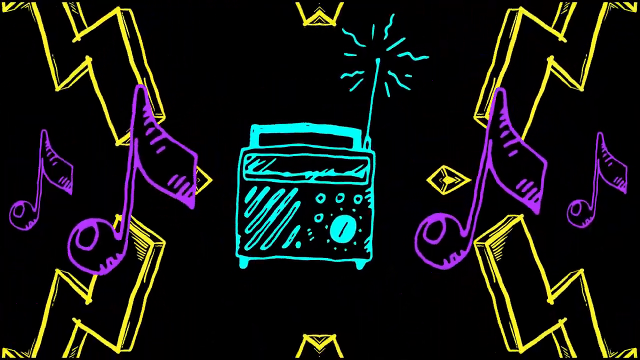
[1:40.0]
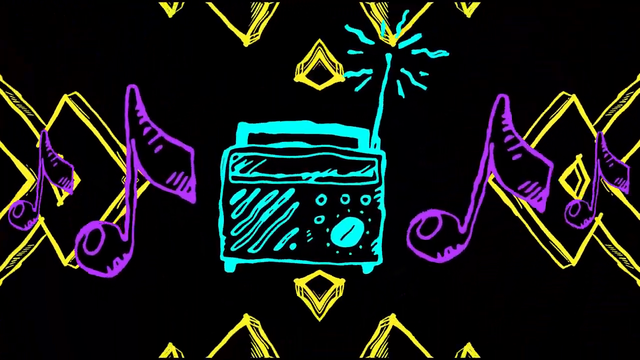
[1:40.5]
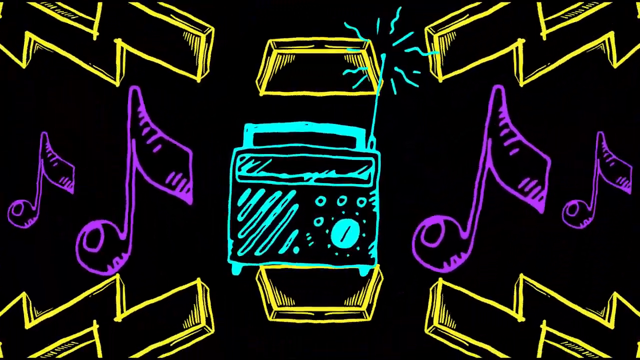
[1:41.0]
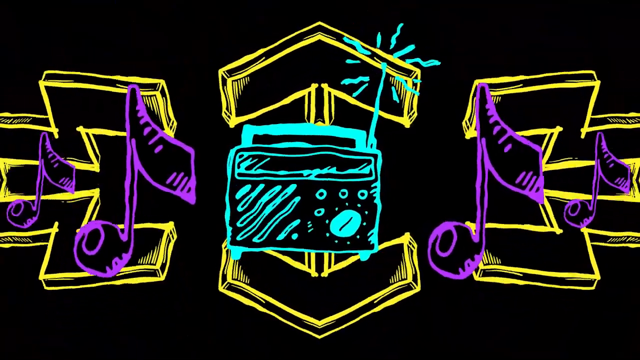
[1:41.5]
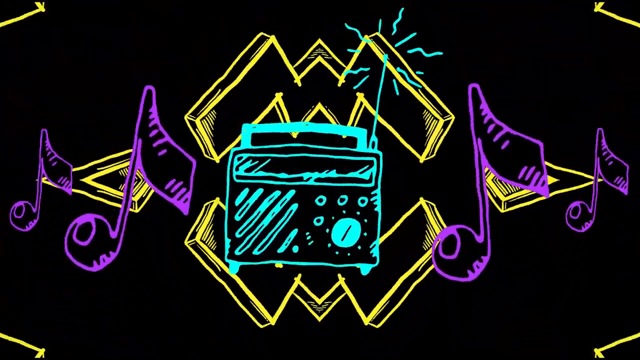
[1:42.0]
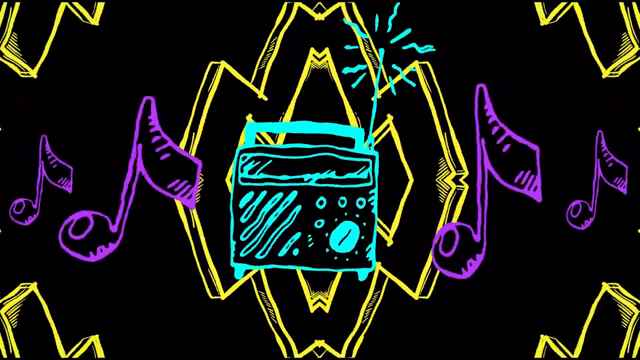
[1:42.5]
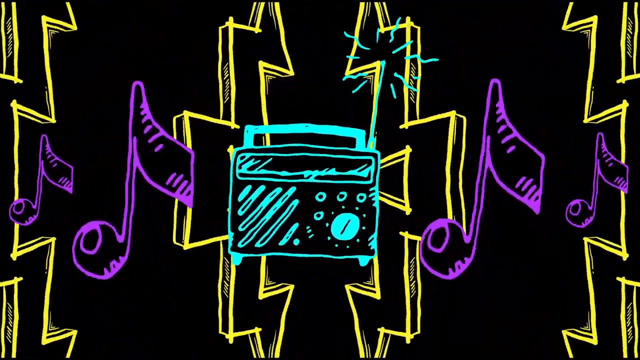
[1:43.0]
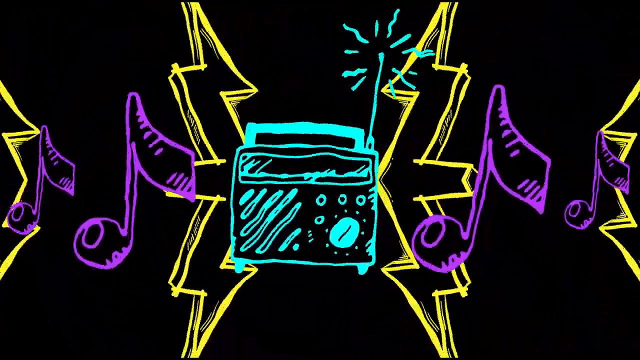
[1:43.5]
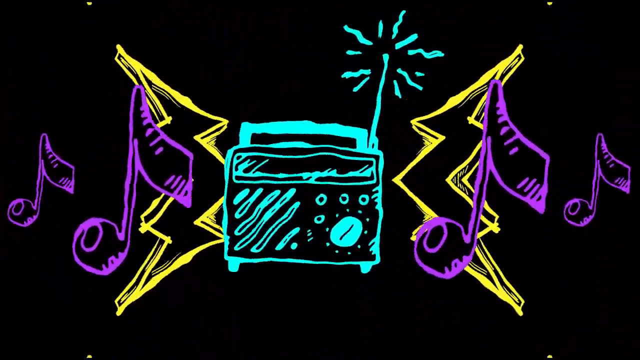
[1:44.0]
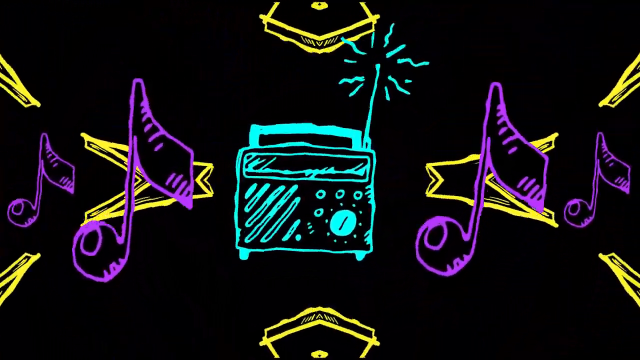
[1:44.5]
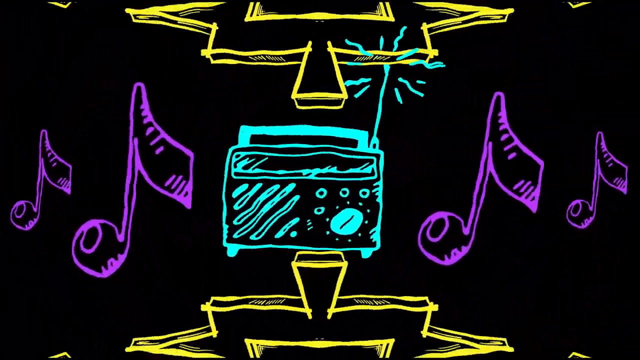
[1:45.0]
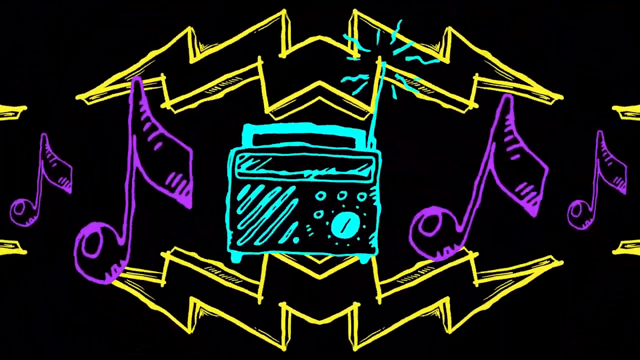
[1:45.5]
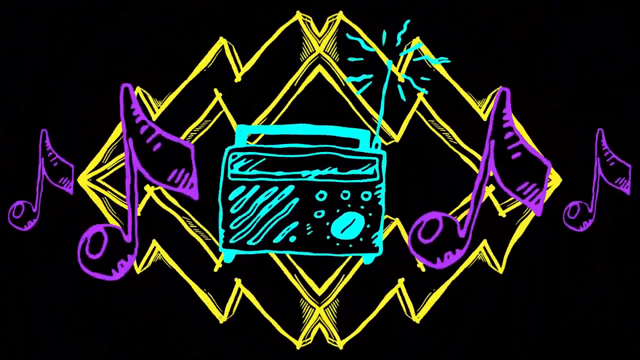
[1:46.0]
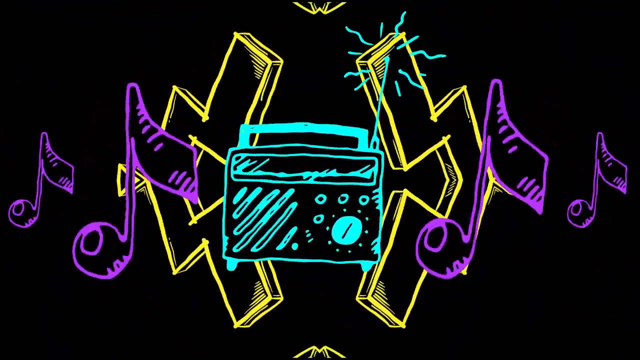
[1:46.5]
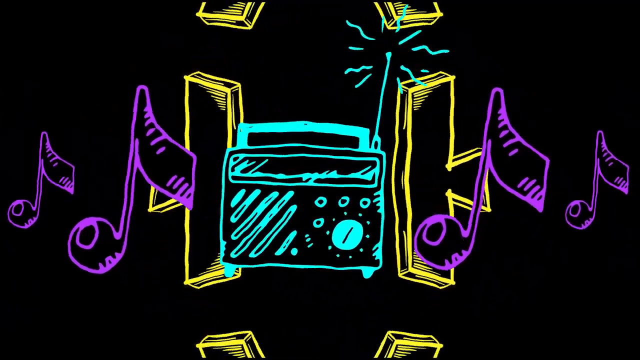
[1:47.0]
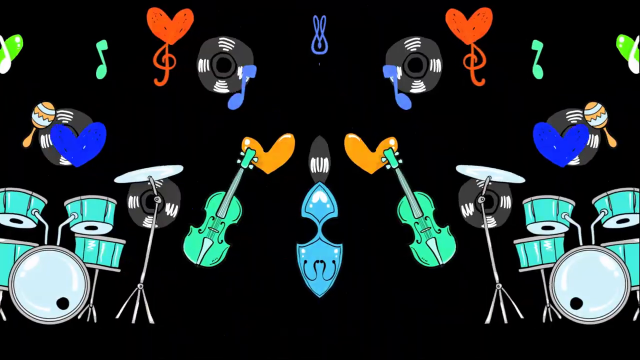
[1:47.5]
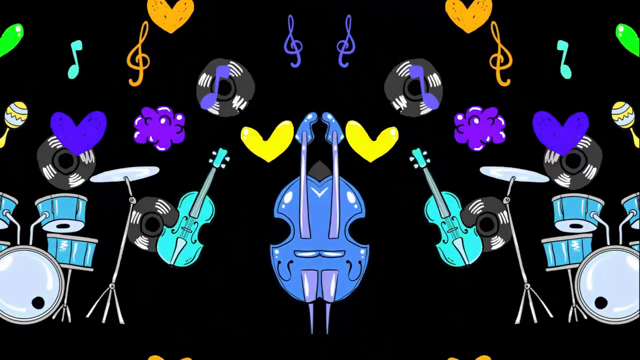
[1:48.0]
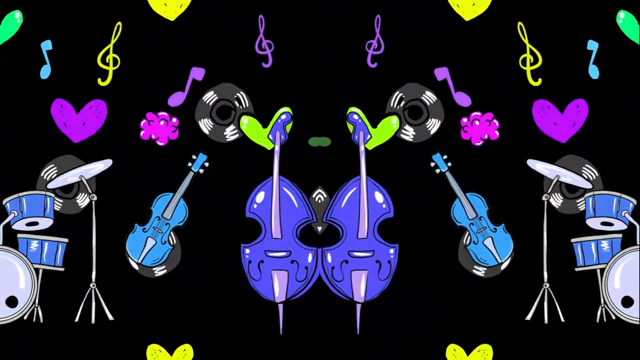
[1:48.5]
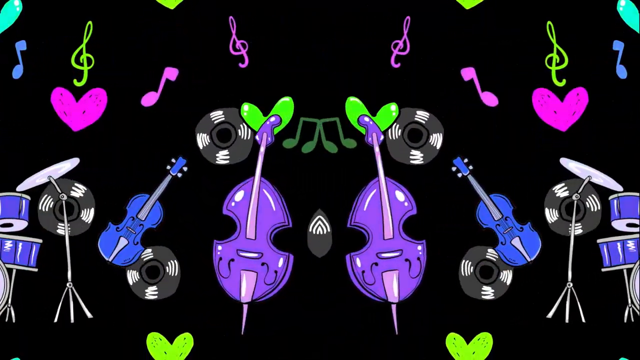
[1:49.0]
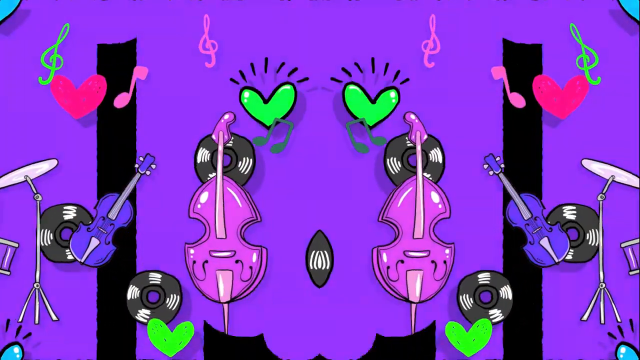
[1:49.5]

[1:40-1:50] The radio appears with music notes on each side of it and something that looks like a thunderbolt at the top and bottom of the background, and those sort of move around. It then transitions to the musical instruments, this time starting from the center of the screen and going out: two drum sets, then two violins and two cellos, originating from the center and moving out to the sides. The video then flashes to an image of other musical instruments on a green background, including a saxophone and a cello, and cuts off a little abruptly.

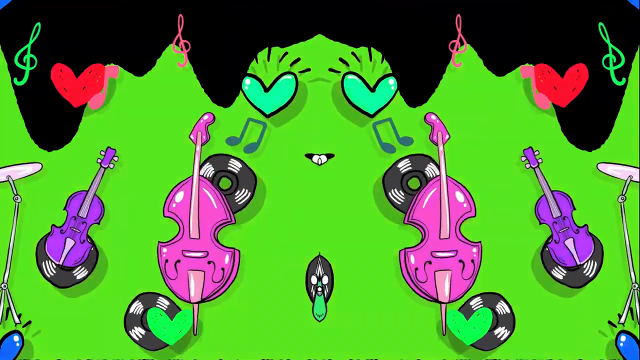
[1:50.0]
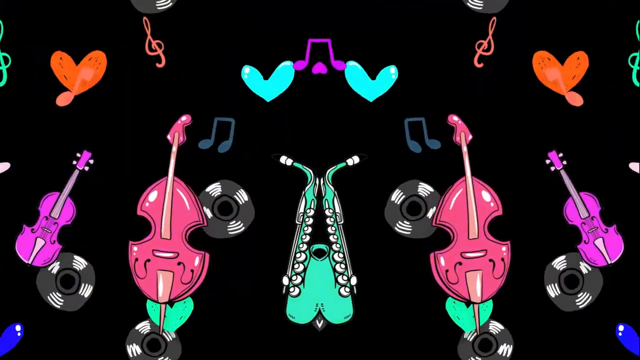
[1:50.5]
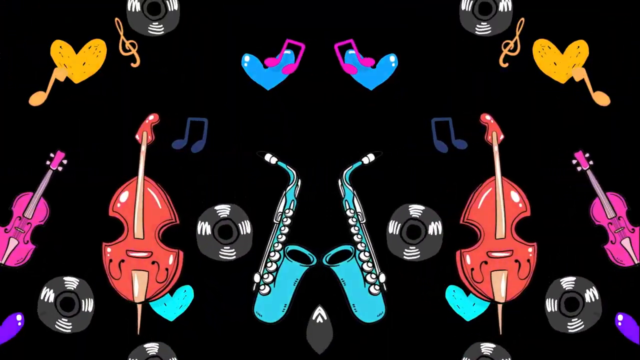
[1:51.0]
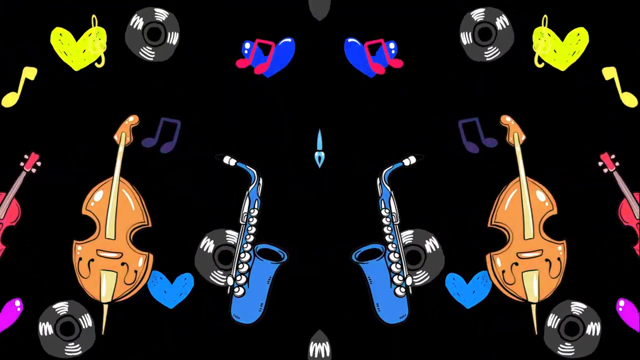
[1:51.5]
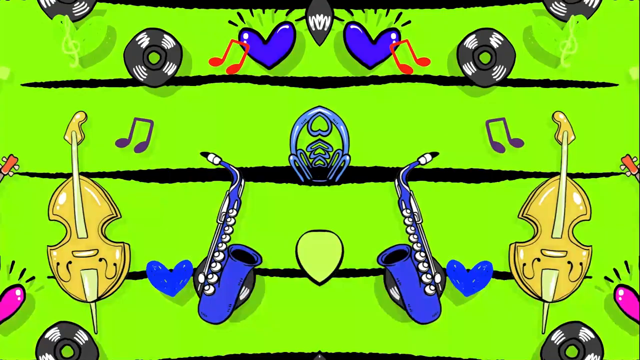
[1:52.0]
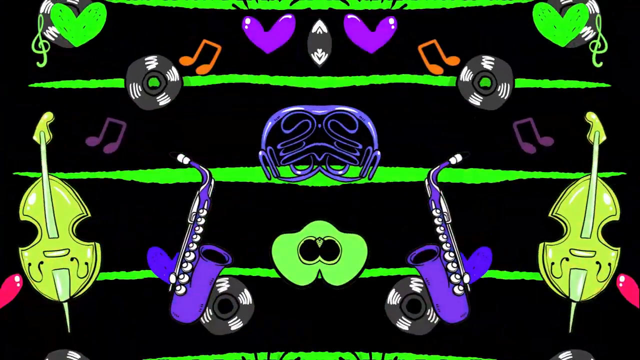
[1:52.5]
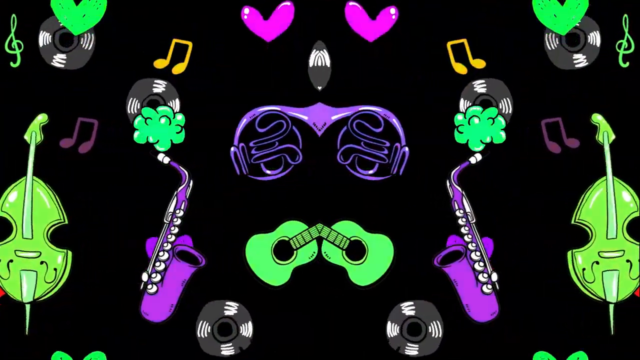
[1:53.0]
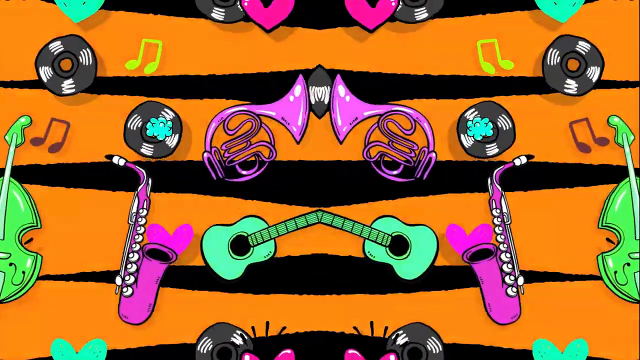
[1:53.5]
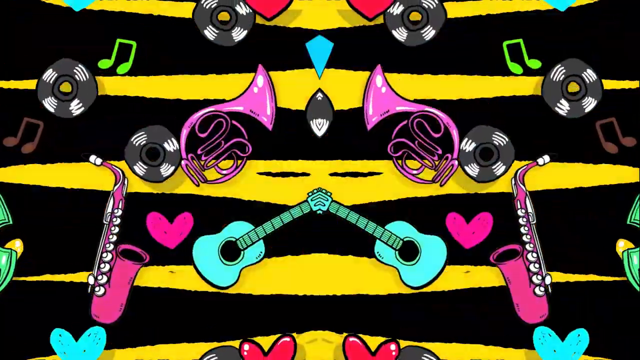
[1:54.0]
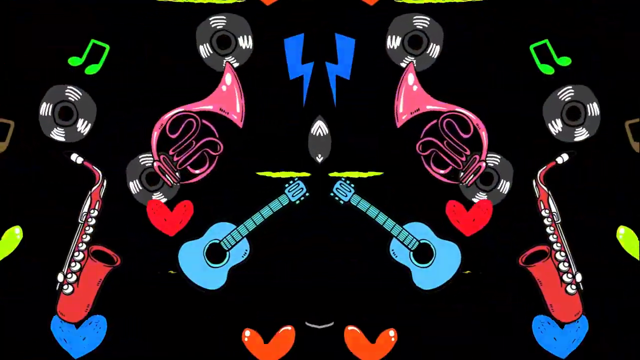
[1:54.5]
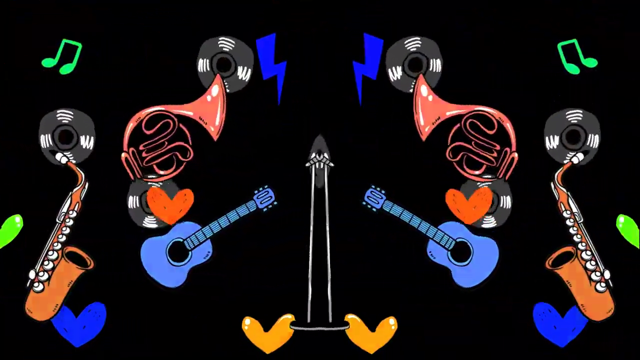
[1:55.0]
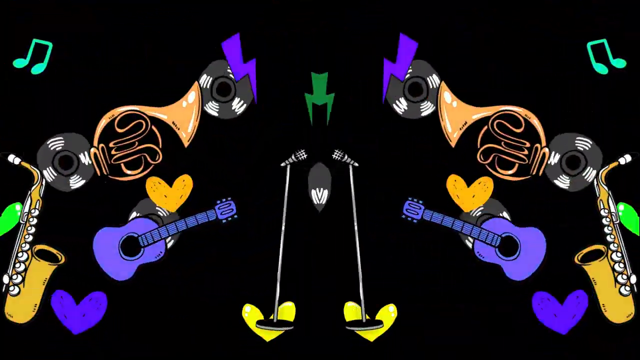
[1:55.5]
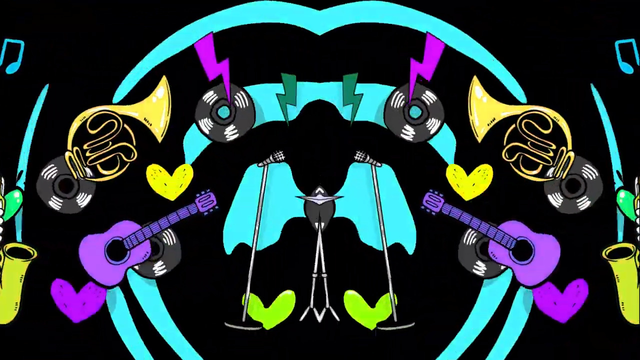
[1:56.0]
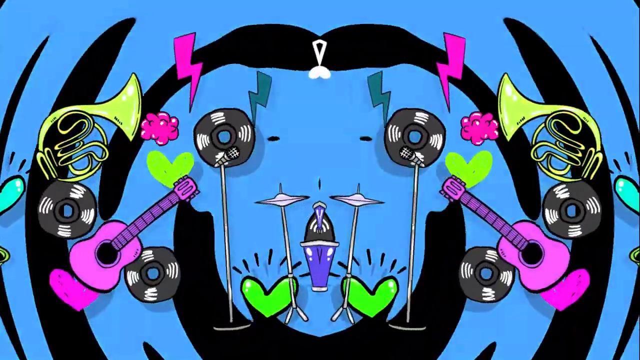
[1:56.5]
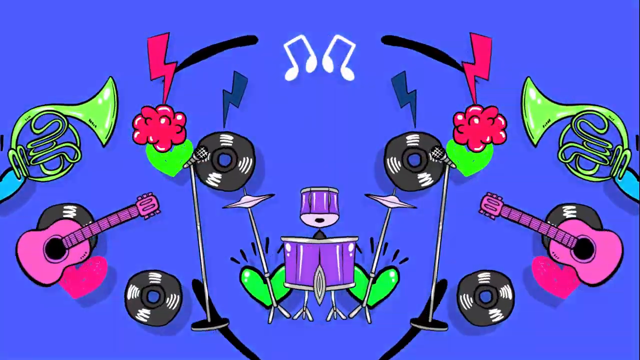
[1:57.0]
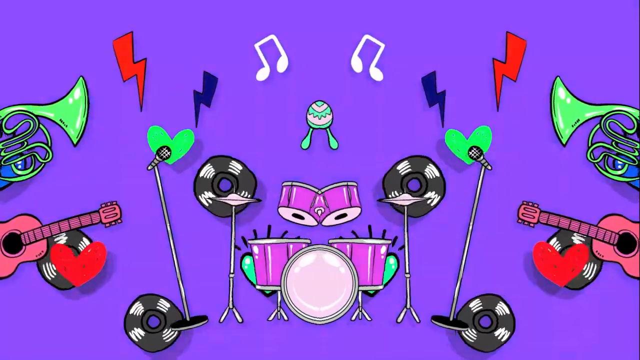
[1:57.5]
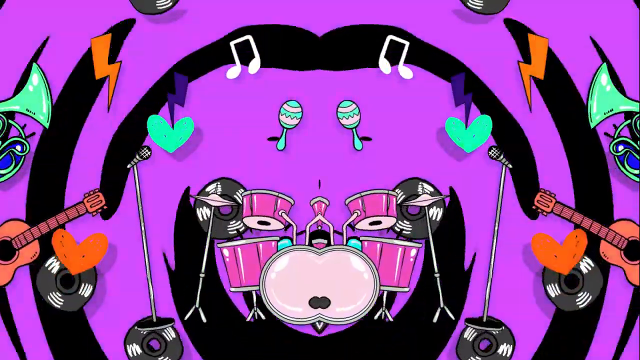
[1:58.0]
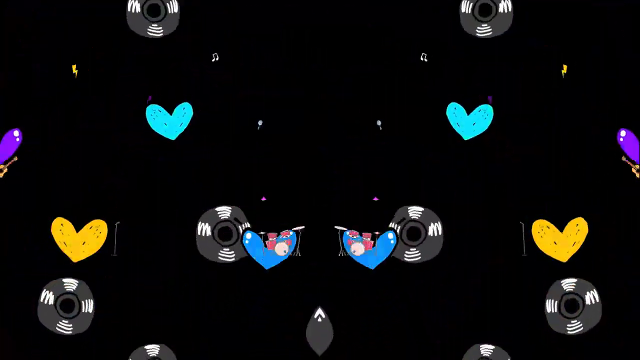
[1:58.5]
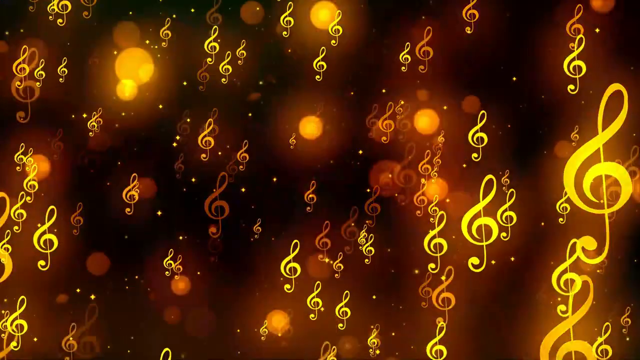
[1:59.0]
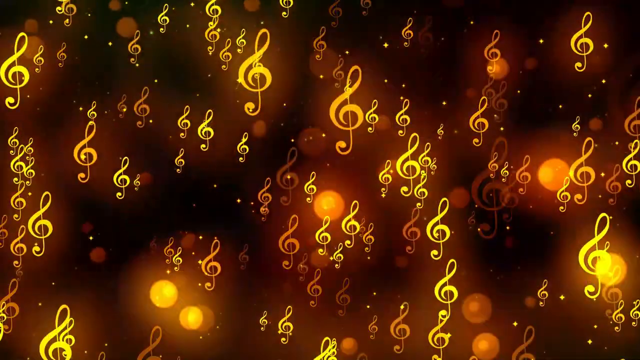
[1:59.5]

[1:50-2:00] The green screen shows the saxophone and the cello, with black lines in the background, and instruments originate from the center of the screen: a trombone, a guitar, a microphone and a drum set. It then transitions to a black background with many music notes placed randomly all over the screen, floating upward from the bottom. They apparently include treble clefs and come in sunset-like colours ranging from red to orange to yellow, in random groups across the screen.